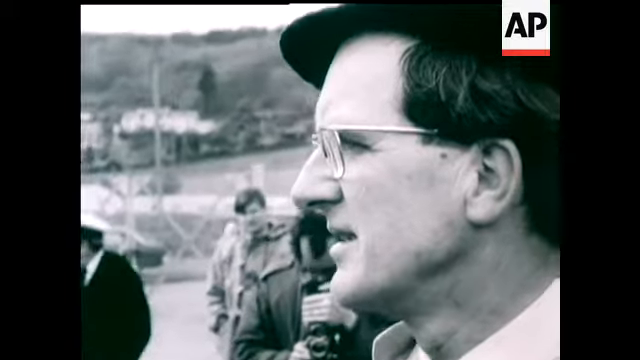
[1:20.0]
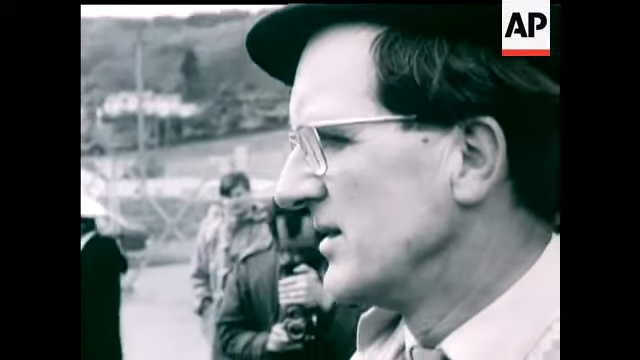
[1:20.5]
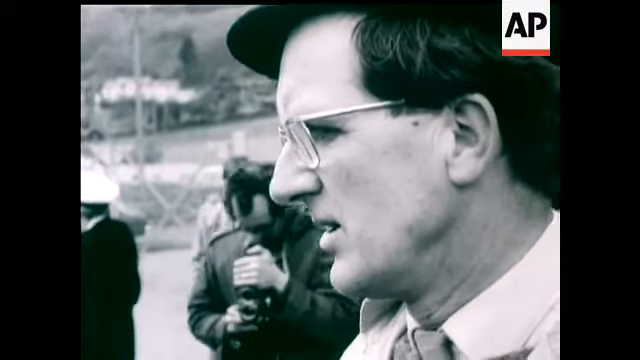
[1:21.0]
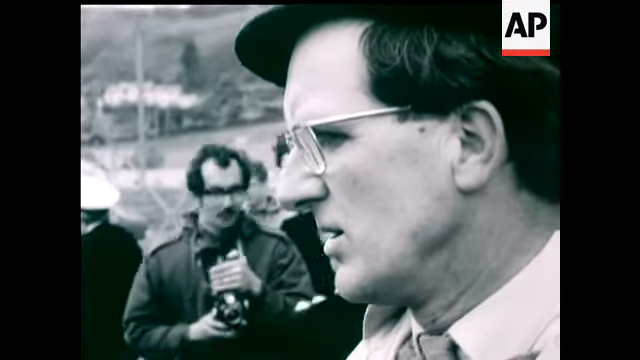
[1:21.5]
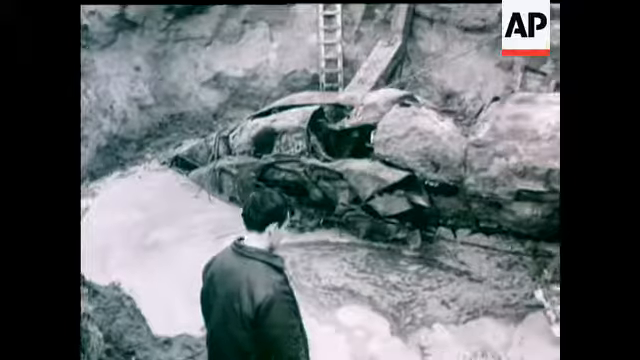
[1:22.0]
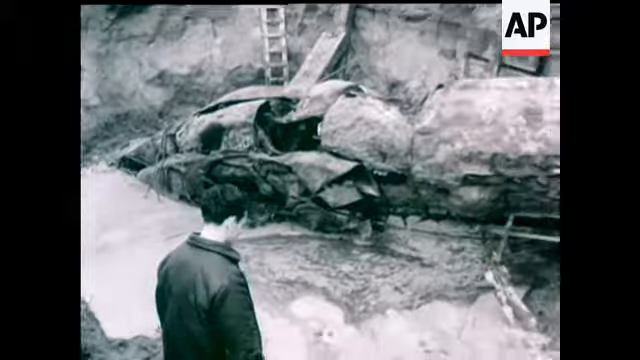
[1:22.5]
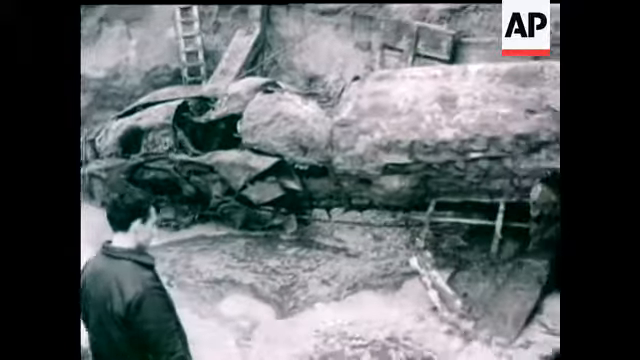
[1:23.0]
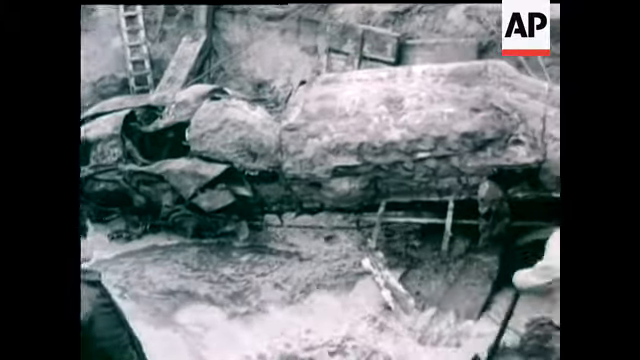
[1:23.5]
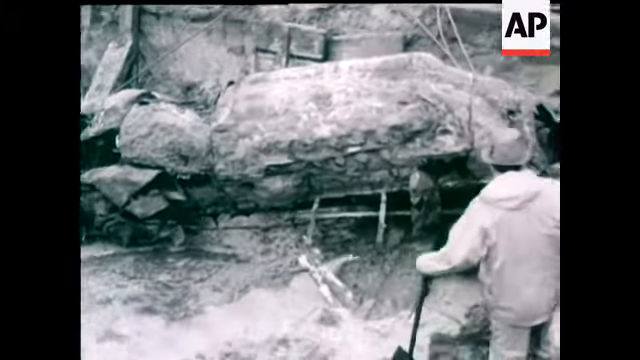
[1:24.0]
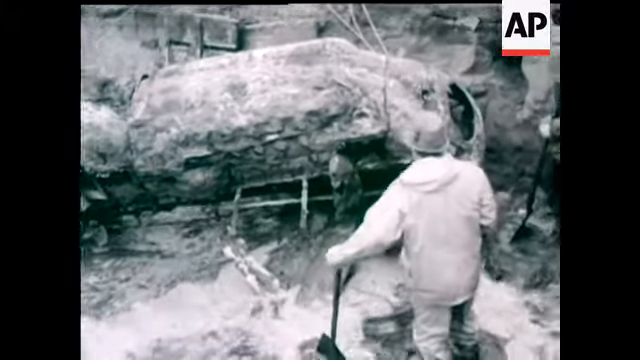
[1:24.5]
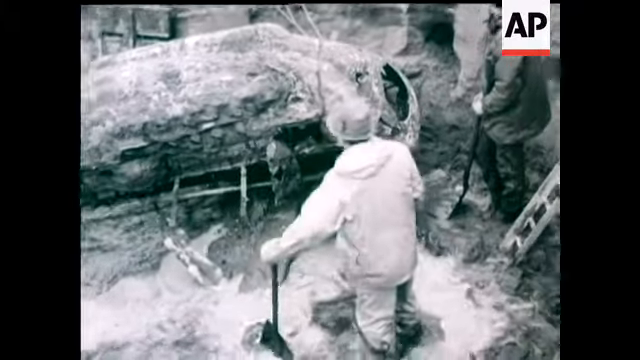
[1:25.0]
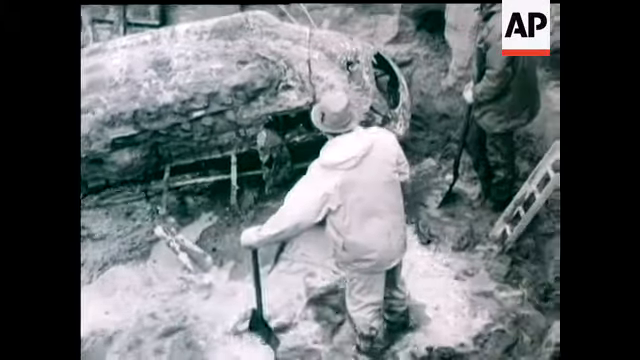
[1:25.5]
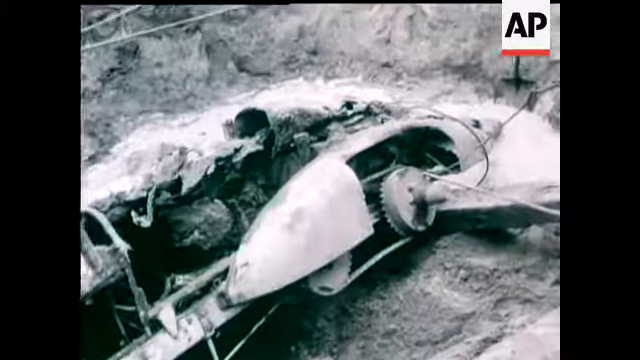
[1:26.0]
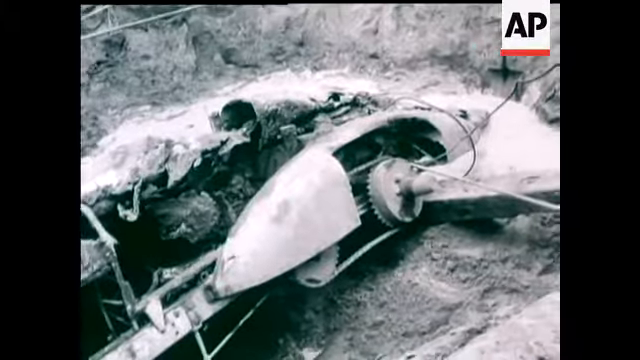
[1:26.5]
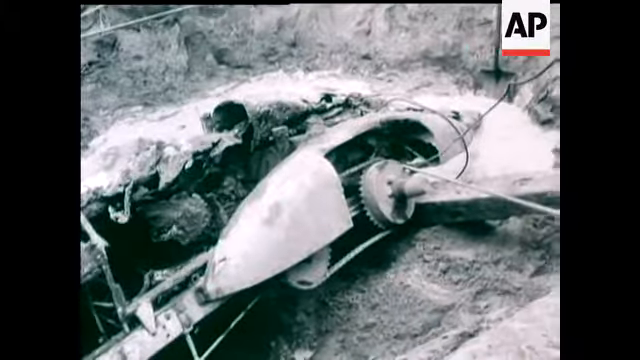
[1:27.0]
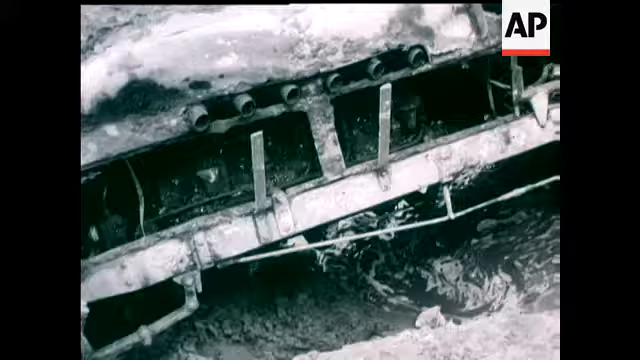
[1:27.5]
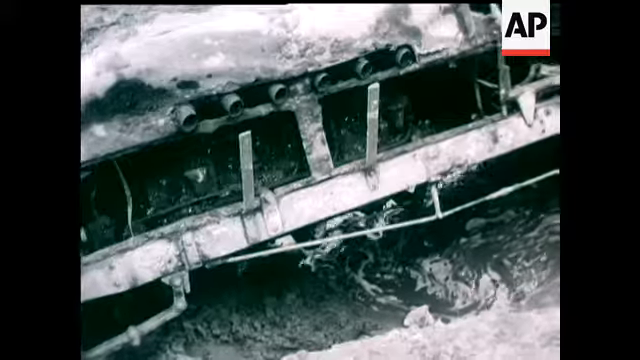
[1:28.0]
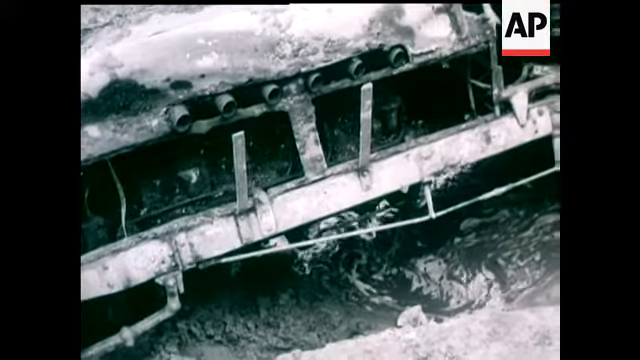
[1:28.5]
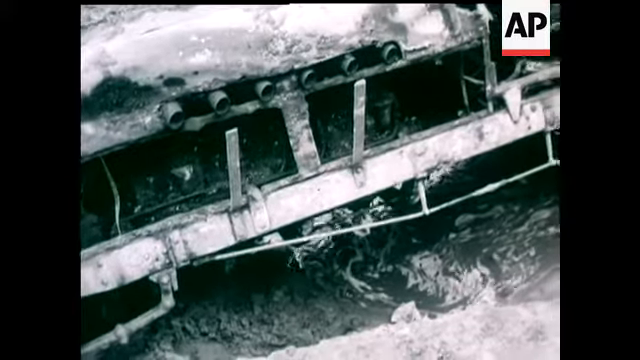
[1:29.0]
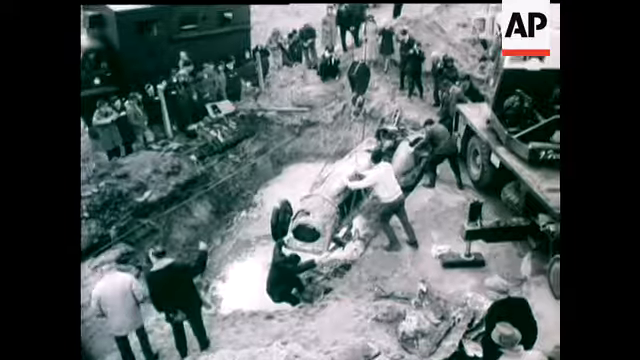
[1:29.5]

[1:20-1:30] Something like a ladder goes down into the mud pit at the top left, and another at the bottom right. The car's wheels are missing, and there is running water beneath it. The car is being pulled up with ropes. Someone beneath it appears to be holding it steady, and someone above it is also holding it steady. On the right is what looks like a trailer. A row of people stands on the left-hand side of the frame, along with a large, box-shaped black truck. The footage is in black and white.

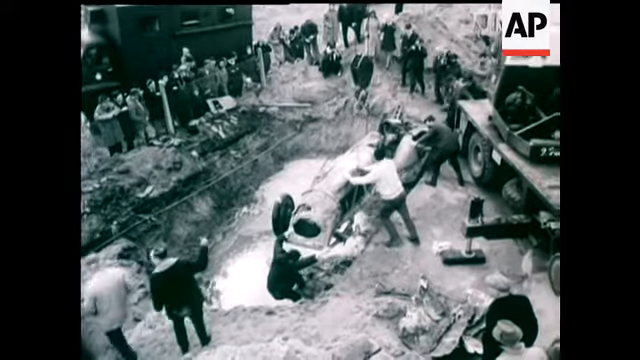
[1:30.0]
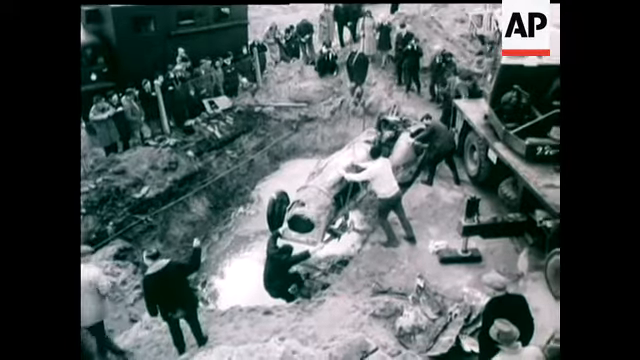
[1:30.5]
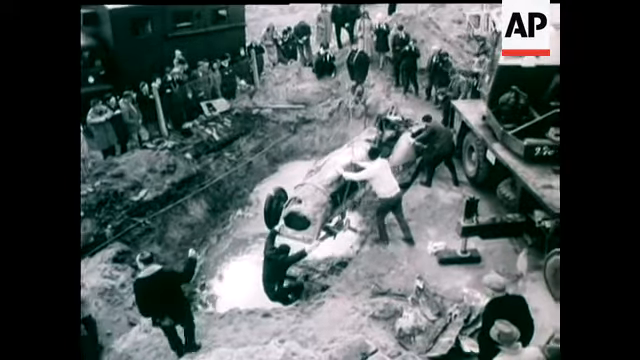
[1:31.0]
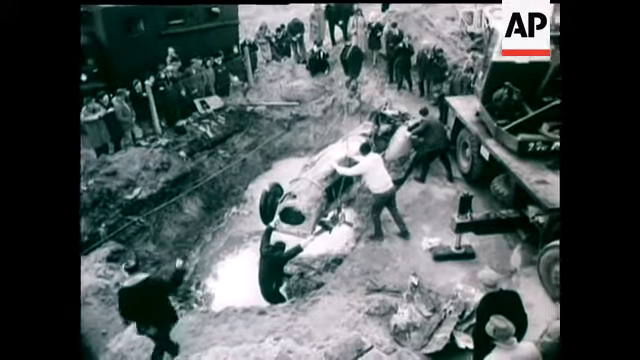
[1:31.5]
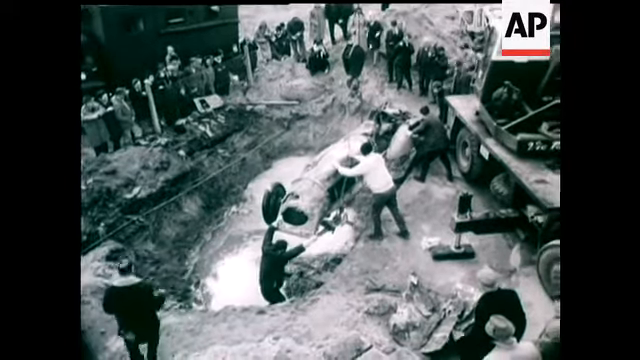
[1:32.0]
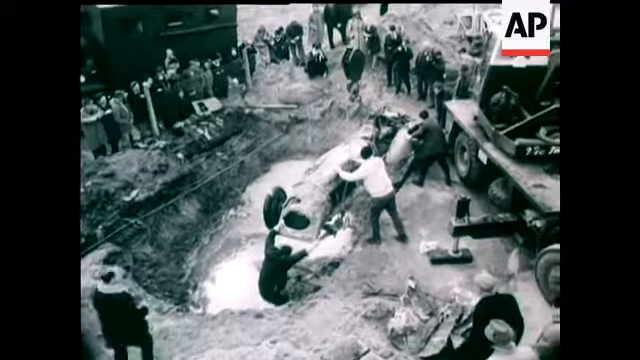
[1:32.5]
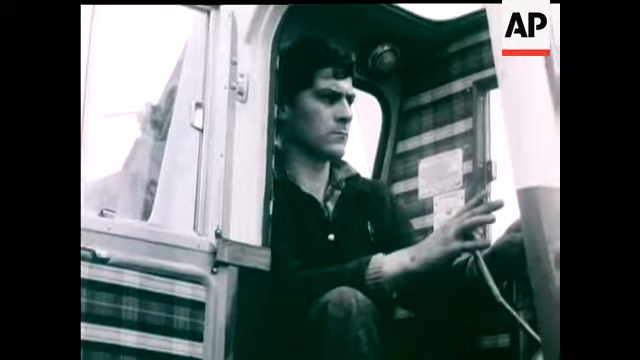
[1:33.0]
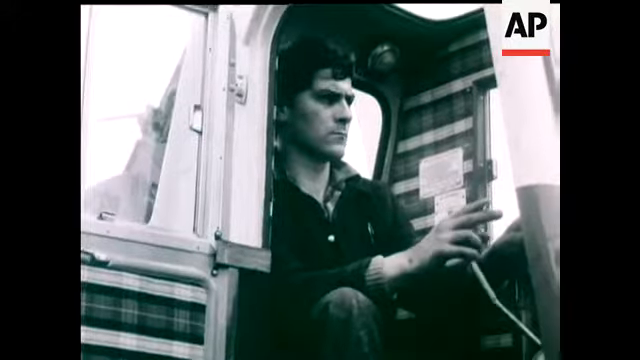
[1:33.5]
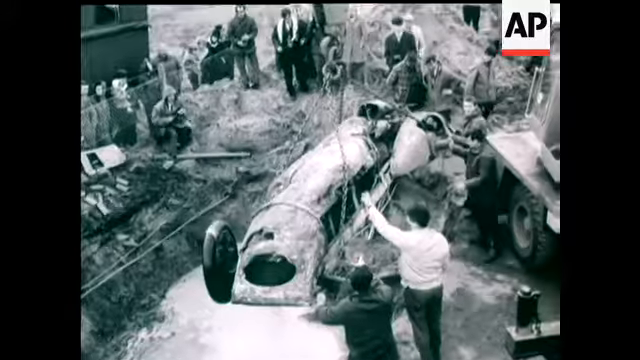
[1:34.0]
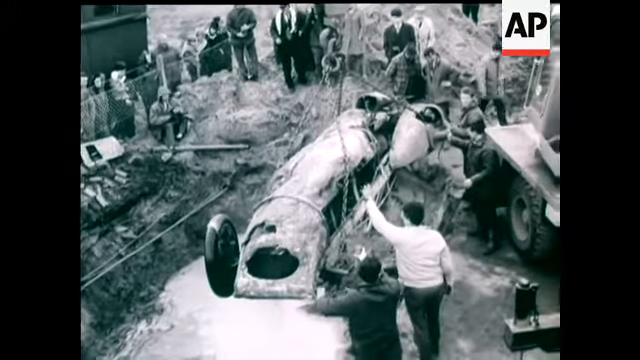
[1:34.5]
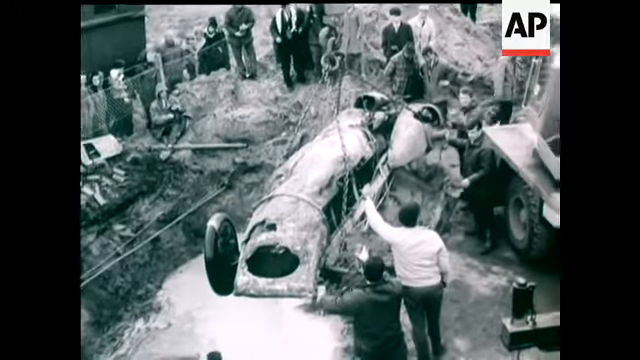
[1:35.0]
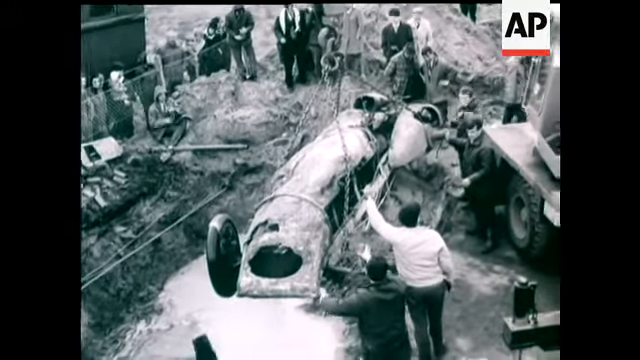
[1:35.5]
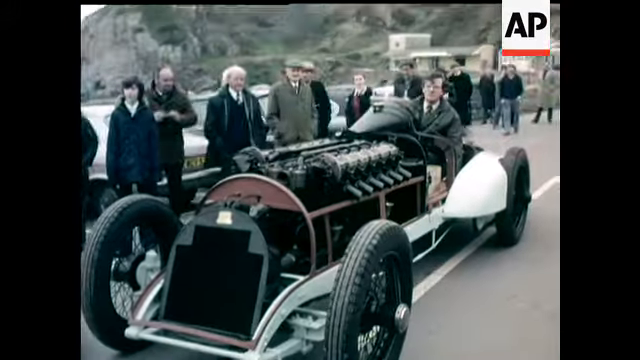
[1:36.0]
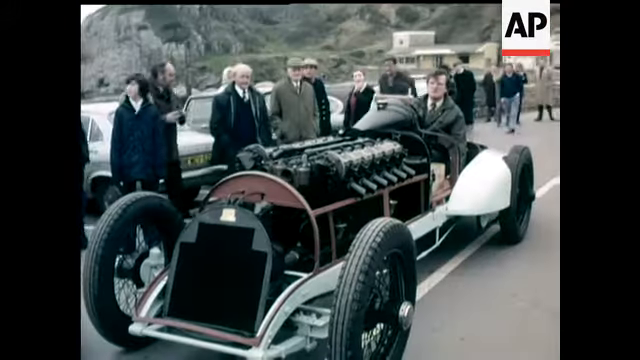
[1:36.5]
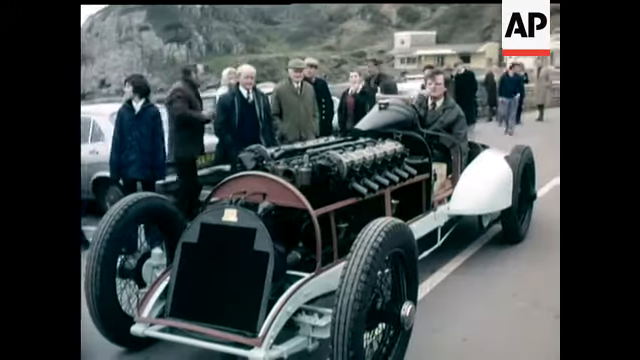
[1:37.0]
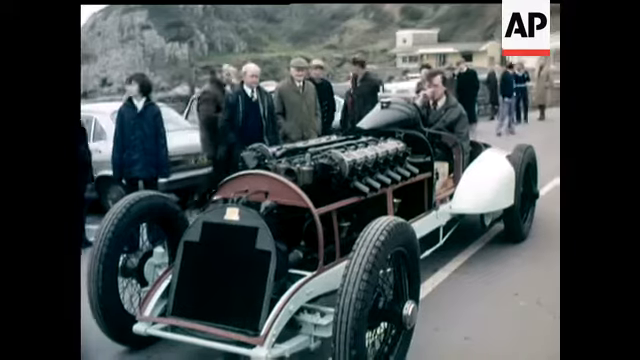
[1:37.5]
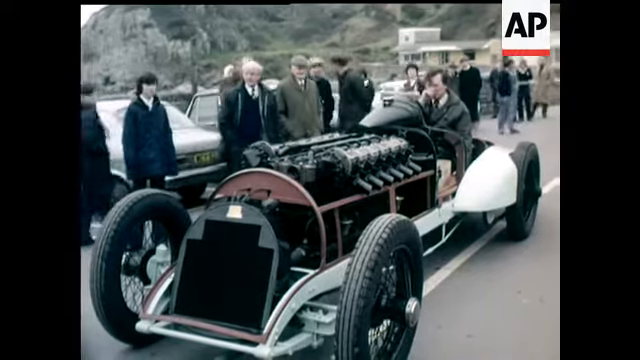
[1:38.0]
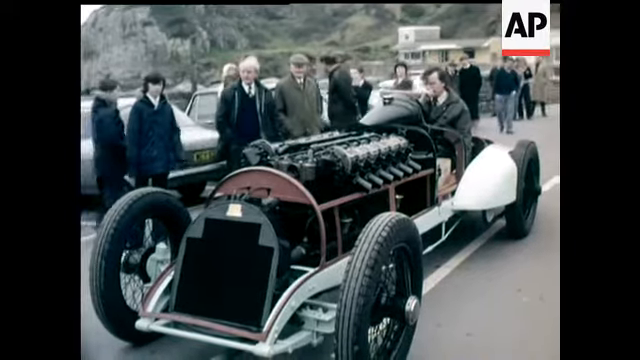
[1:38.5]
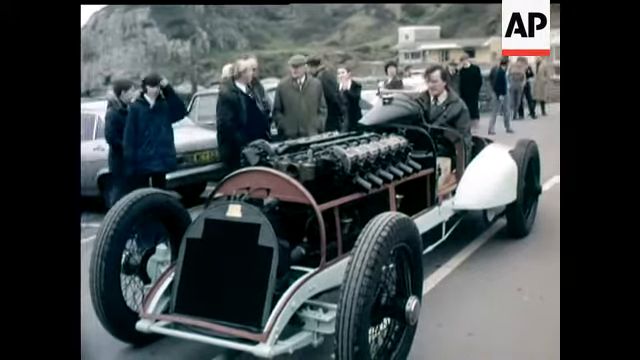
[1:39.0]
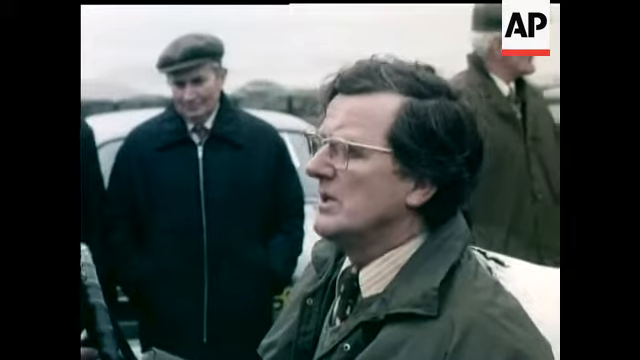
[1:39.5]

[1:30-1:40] The car is being pulled by a crane, and a crane operator inside the booth uses a knob to move the crane. Another of these rocket cars is then shown, with someone seated inside it. This footage is in color and appears to be on a roadway in the daytime; it appears to be old footage, possibly from the 40s or 50s. In the background is a large rocky hillside. People stand on the side of the road, and cars are parked on the left side just behind them.